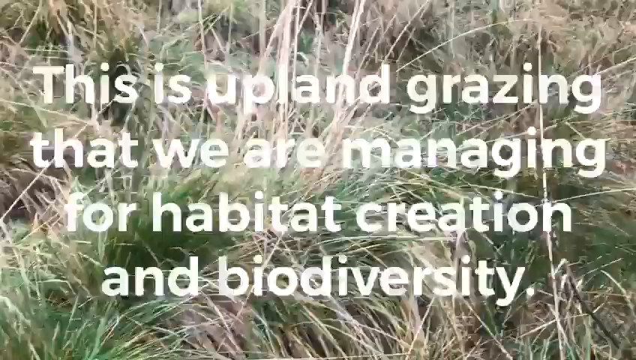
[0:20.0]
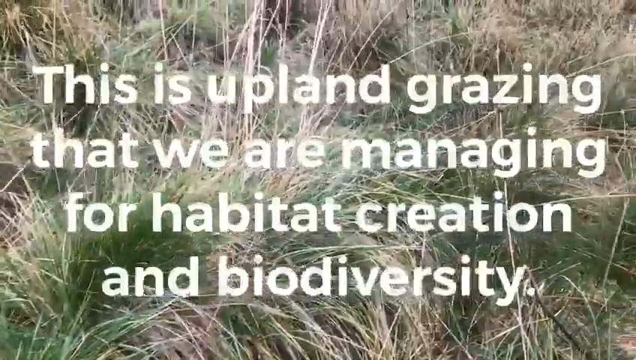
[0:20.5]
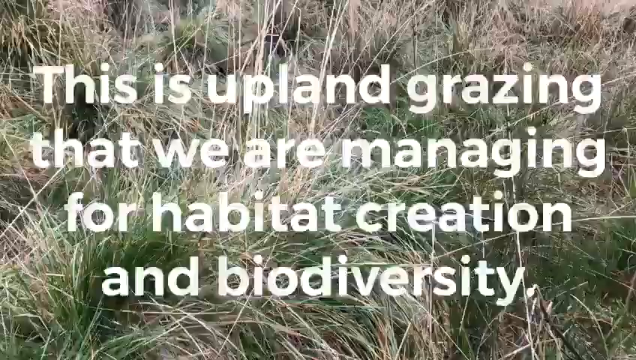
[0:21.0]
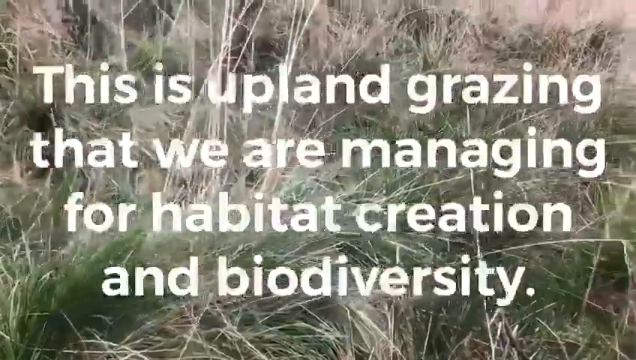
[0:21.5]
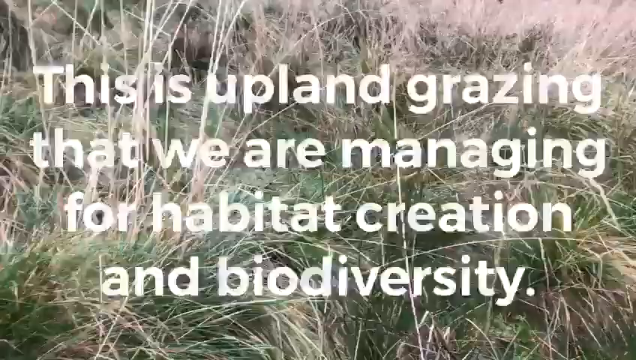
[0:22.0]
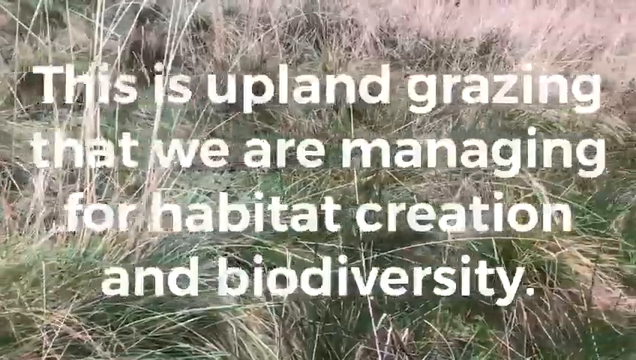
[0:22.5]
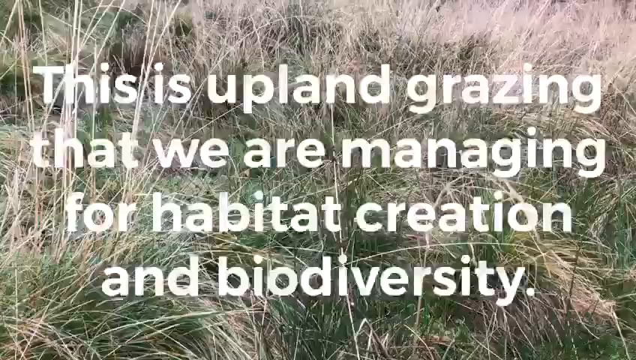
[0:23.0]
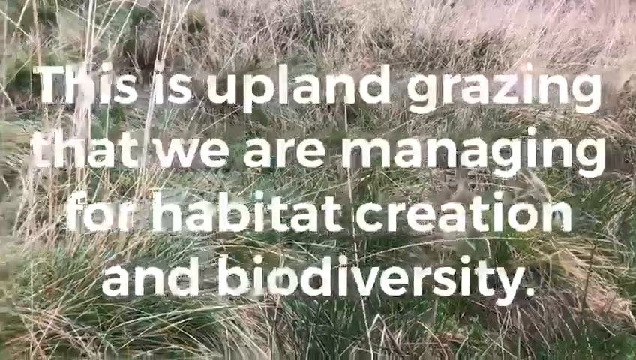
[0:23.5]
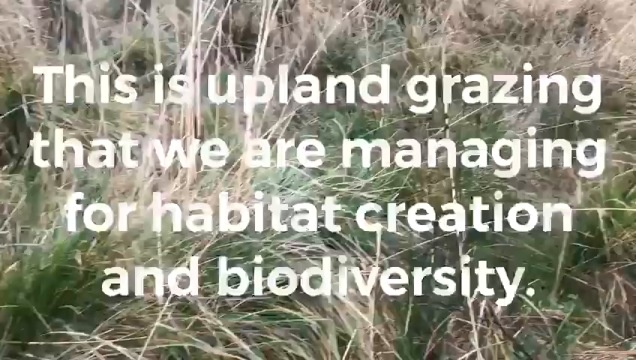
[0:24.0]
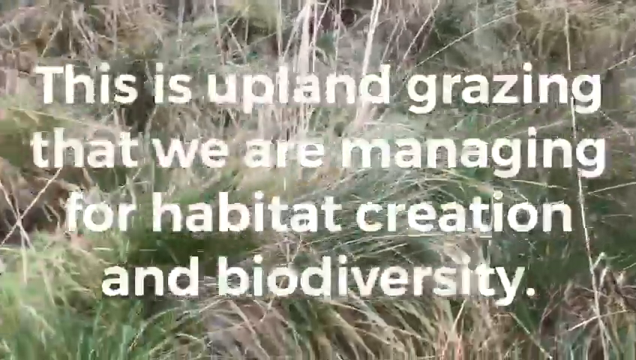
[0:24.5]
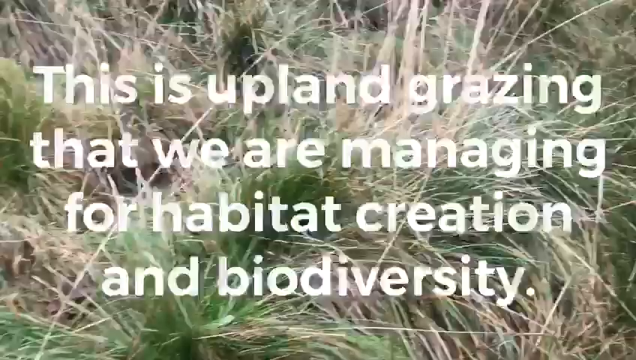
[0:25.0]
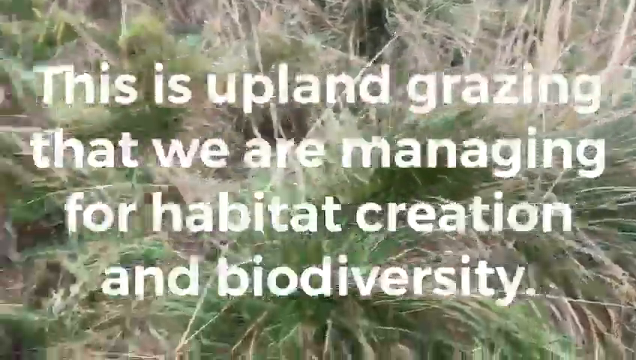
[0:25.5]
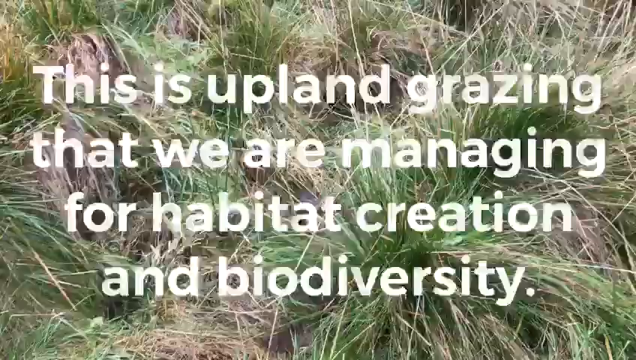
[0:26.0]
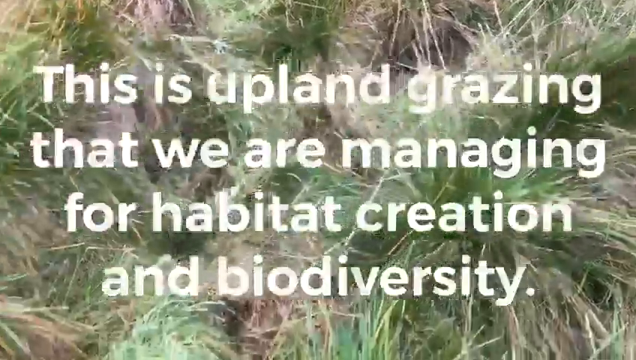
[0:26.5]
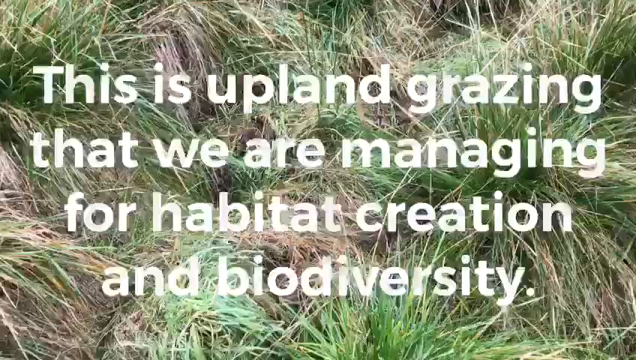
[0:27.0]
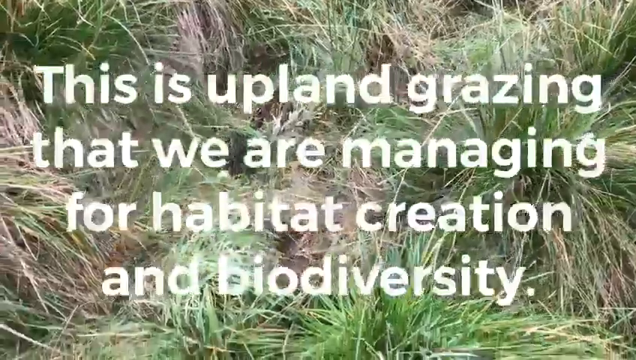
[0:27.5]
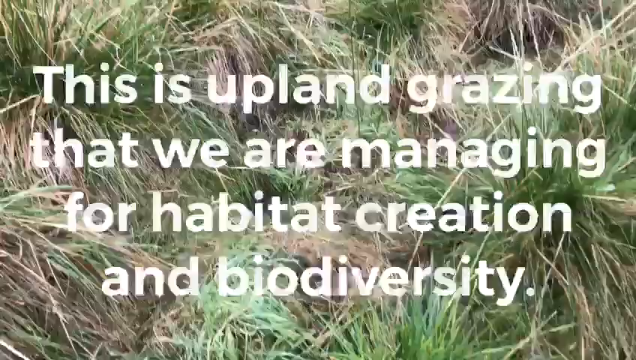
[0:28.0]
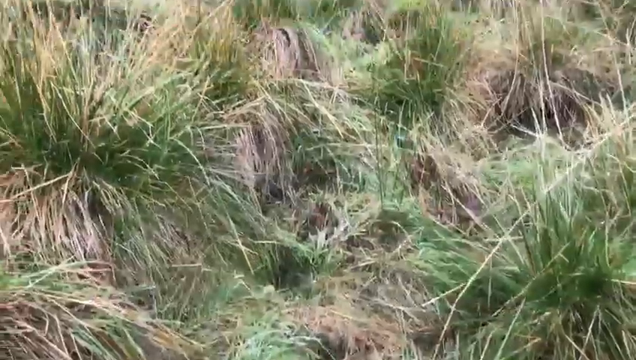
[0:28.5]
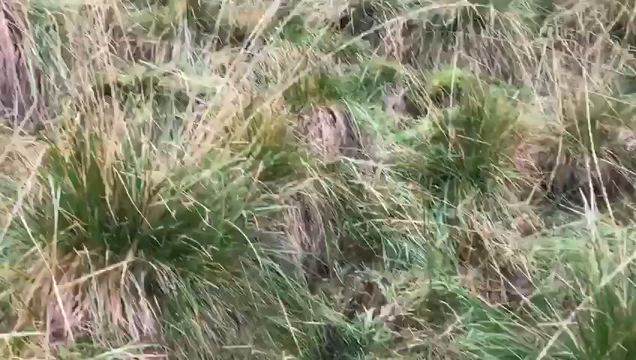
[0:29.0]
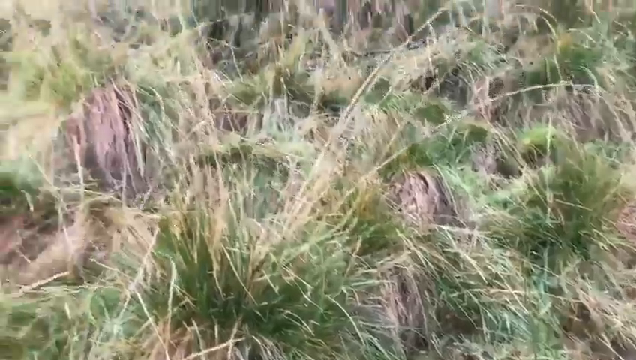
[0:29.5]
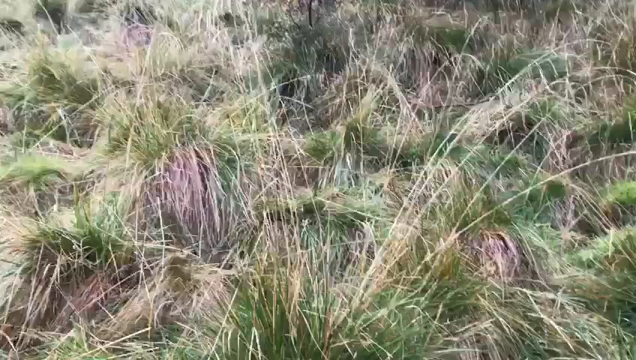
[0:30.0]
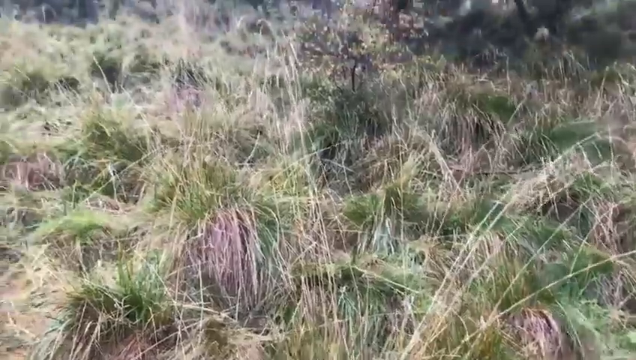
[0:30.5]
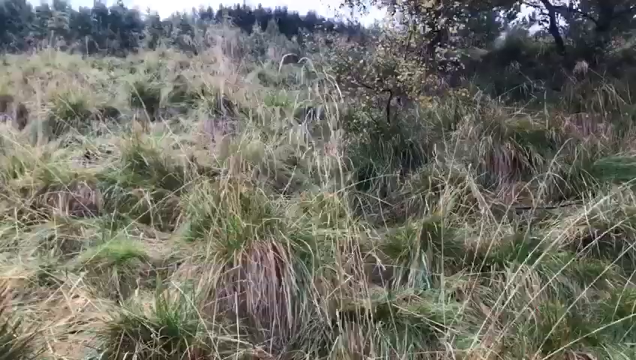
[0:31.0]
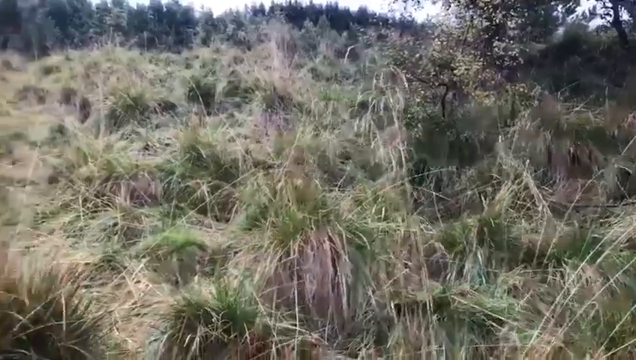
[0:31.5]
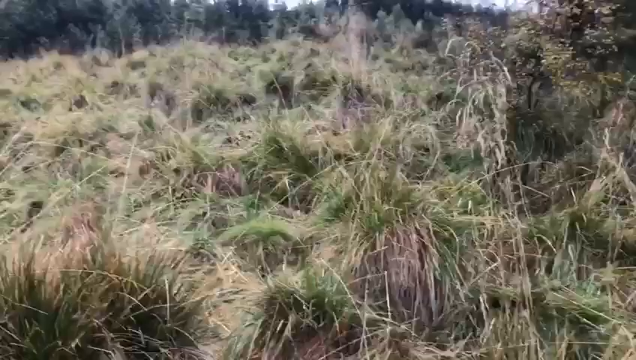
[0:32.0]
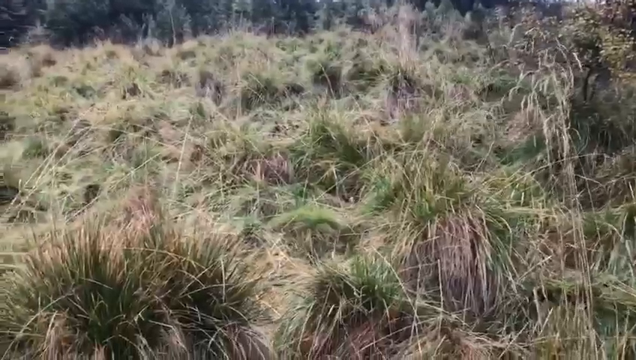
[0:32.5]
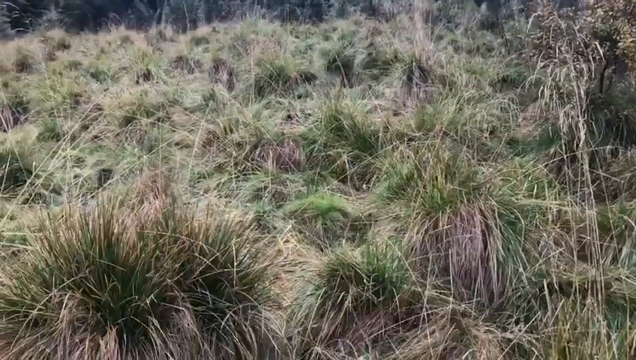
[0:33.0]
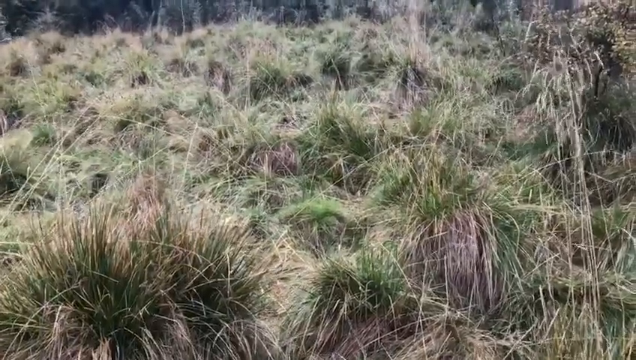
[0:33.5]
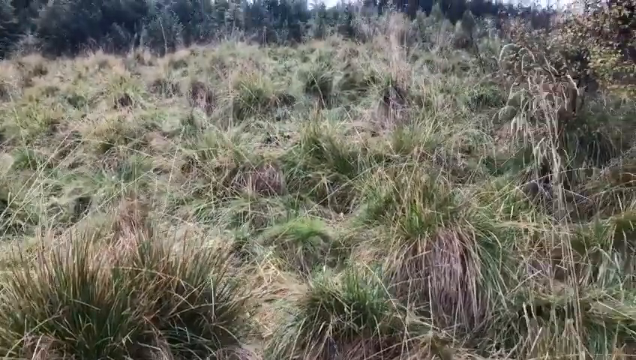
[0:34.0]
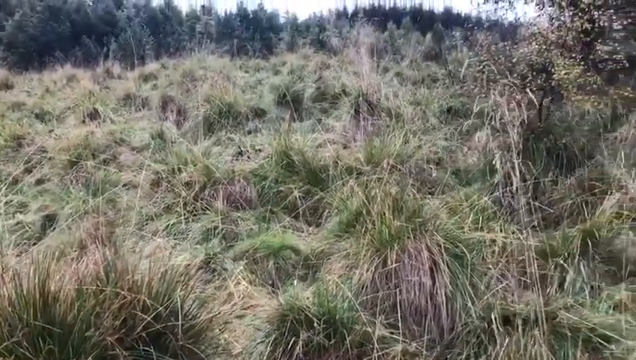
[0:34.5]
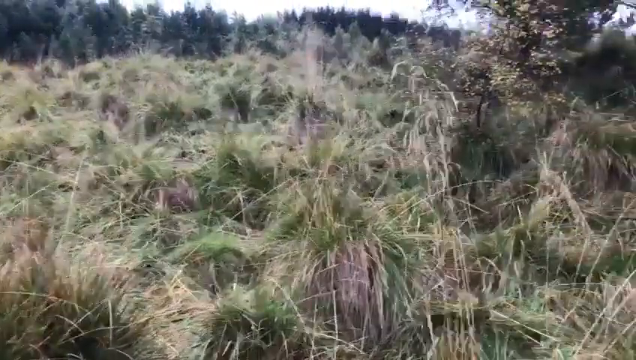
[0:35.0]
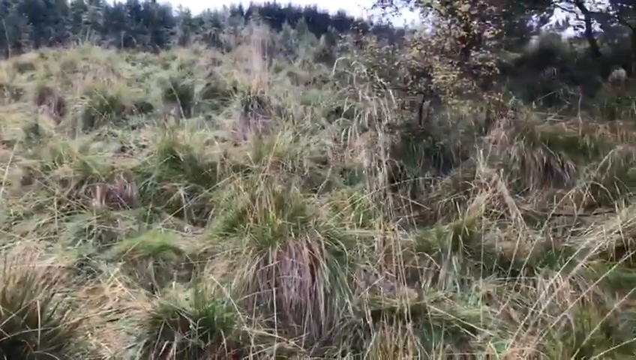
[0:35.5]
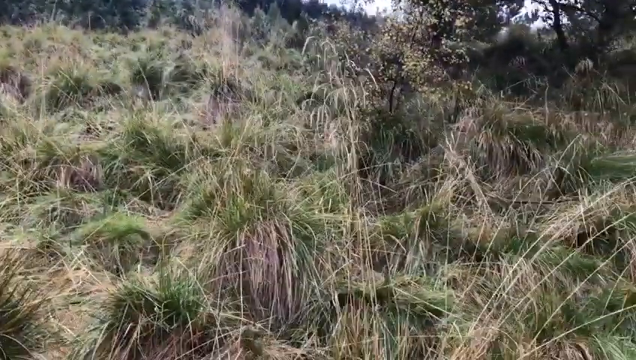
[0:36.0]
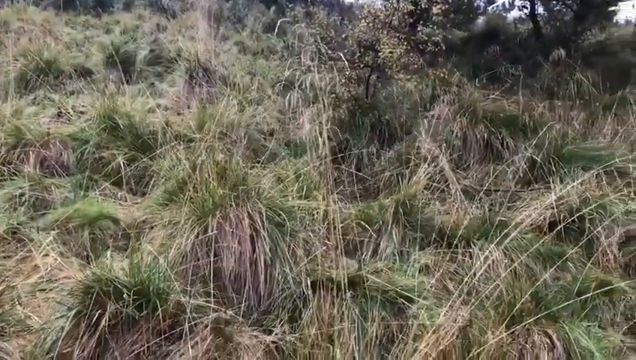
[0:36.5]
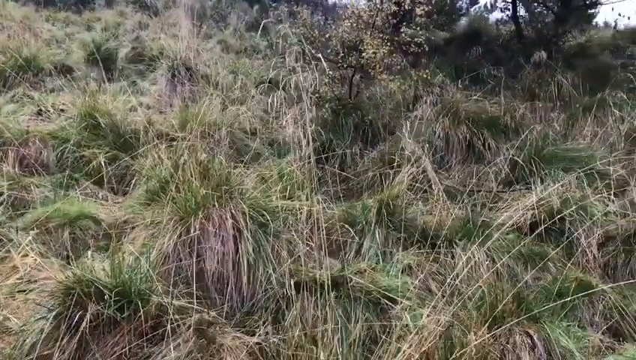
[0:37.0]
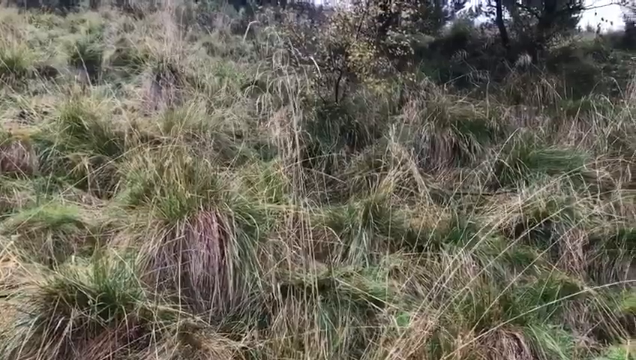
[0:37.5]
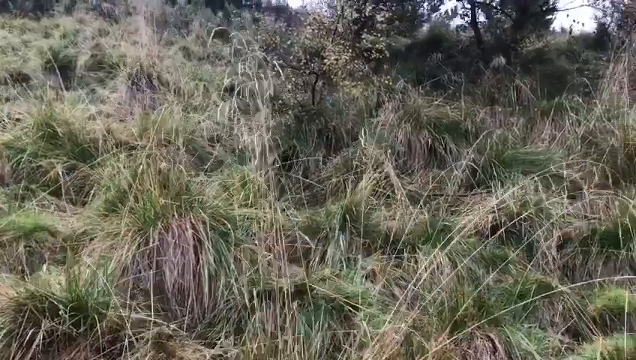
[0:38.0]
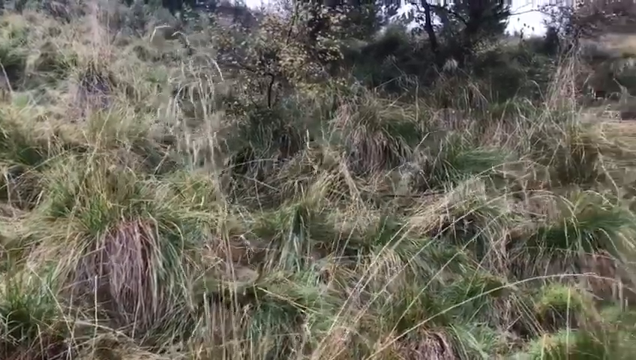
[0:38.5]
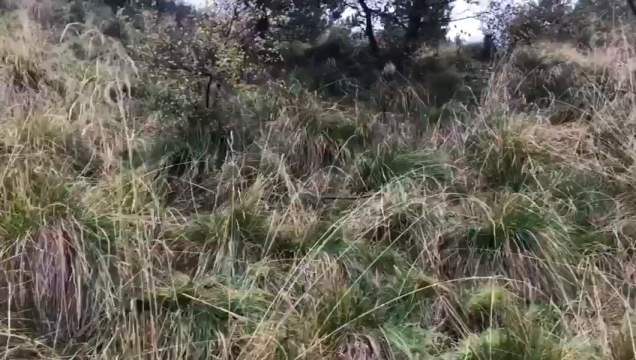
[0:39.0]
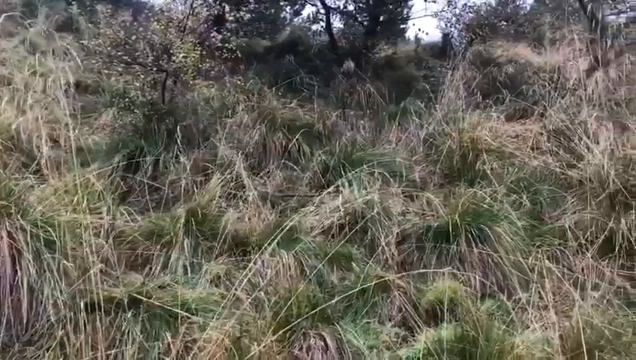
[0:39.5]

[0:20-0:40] White text on a grassy background reads "This is upland grazing that we are managing for habitat creation and biodiversity." The text disappears, revealing a lush, ascending hillside of pasture for grazing animals, with thick grass mixed with a few scattered hints of wild clover. The camera is near ground level, panning as it looks up the hillside across the grasses. Toward the end, several trees appear in the distance at the top of the screen, as though a tree line runs toward the overcast skyline.